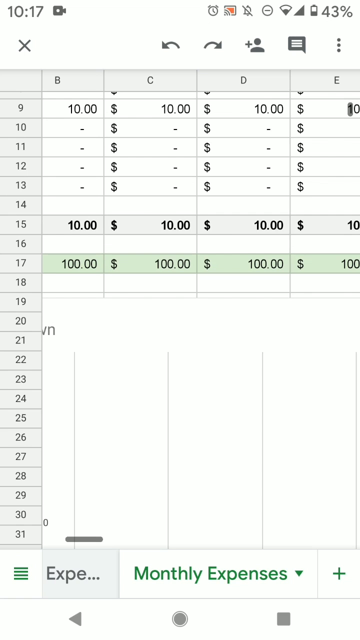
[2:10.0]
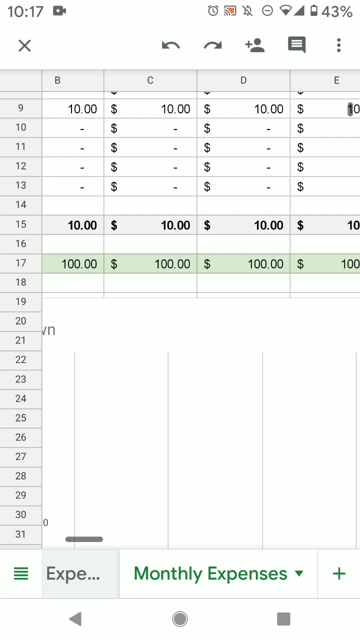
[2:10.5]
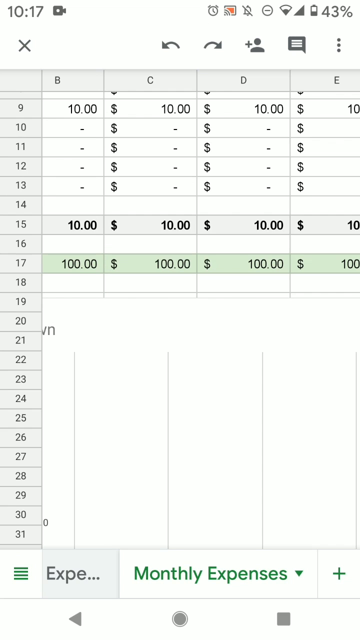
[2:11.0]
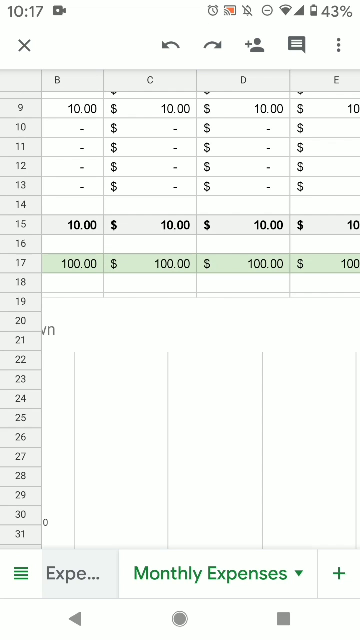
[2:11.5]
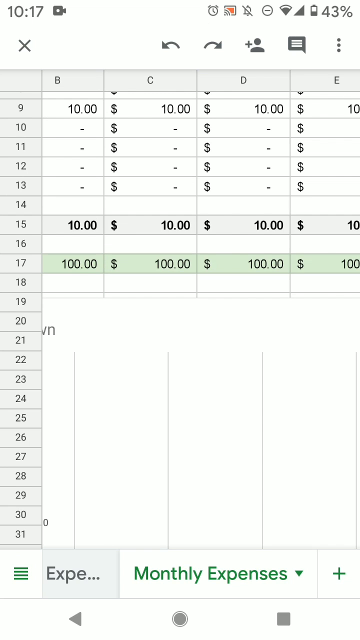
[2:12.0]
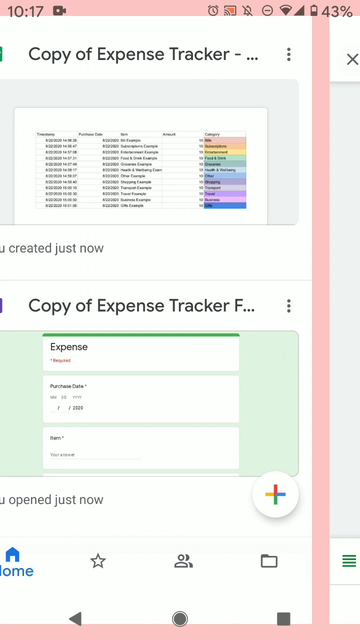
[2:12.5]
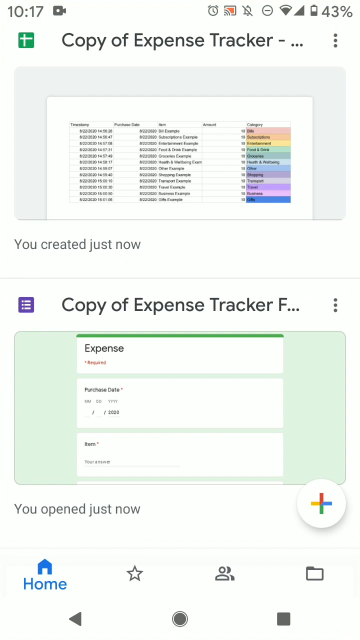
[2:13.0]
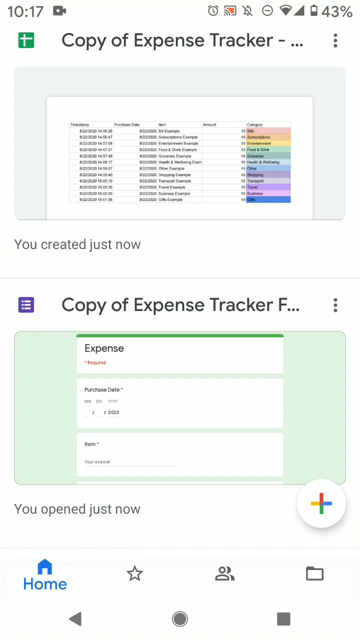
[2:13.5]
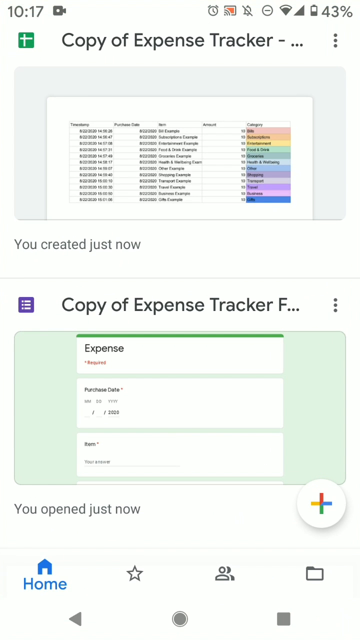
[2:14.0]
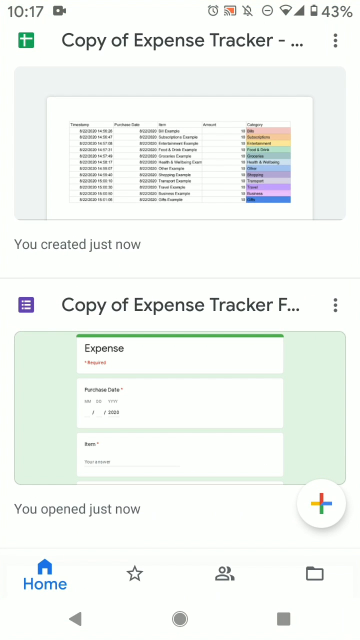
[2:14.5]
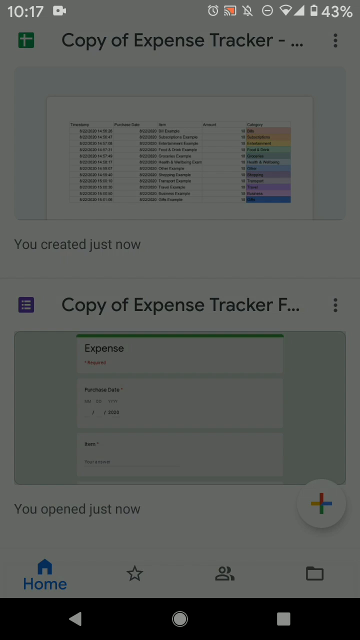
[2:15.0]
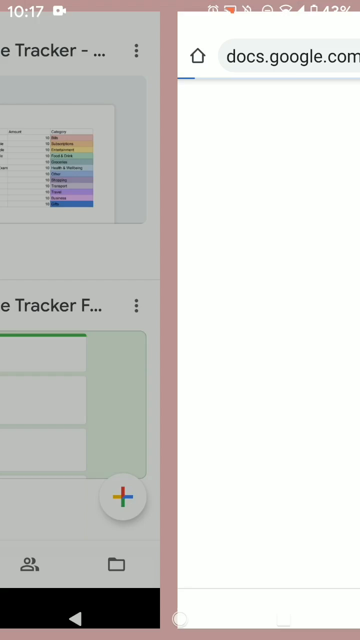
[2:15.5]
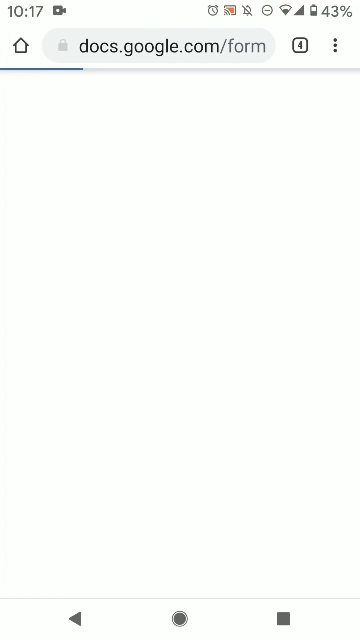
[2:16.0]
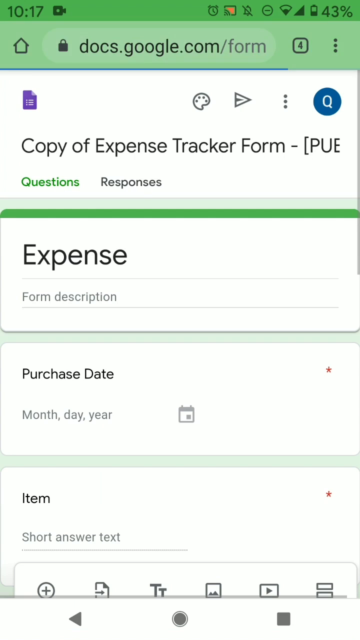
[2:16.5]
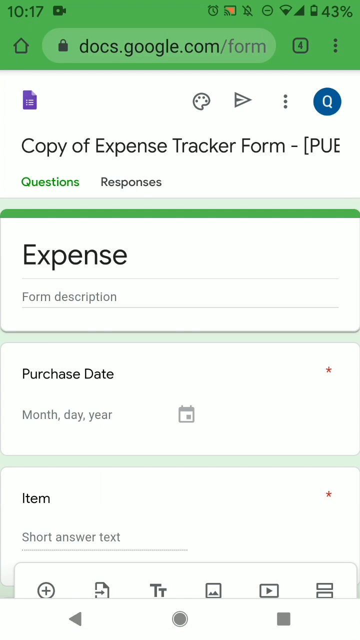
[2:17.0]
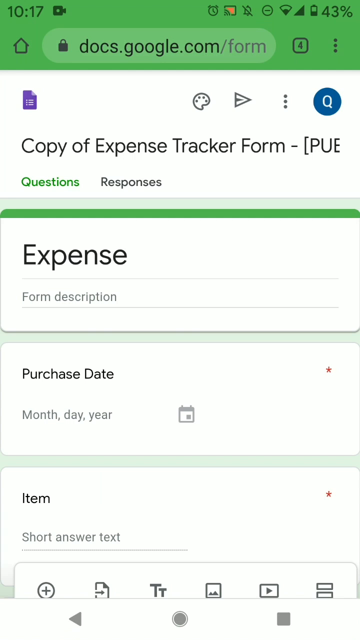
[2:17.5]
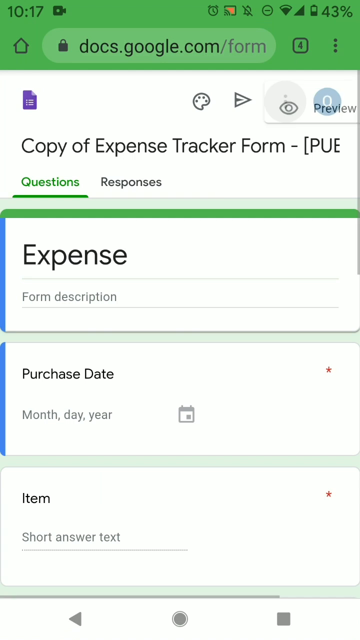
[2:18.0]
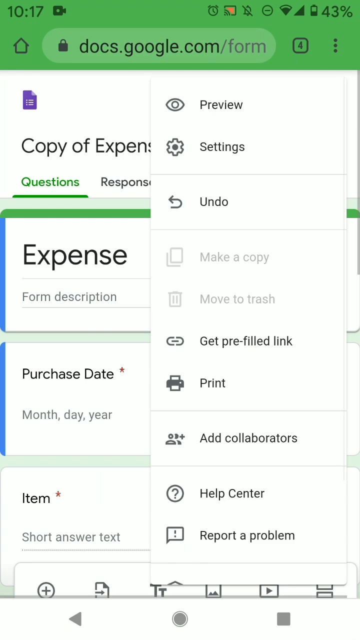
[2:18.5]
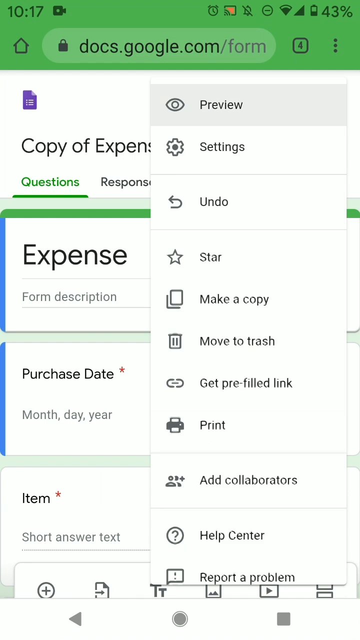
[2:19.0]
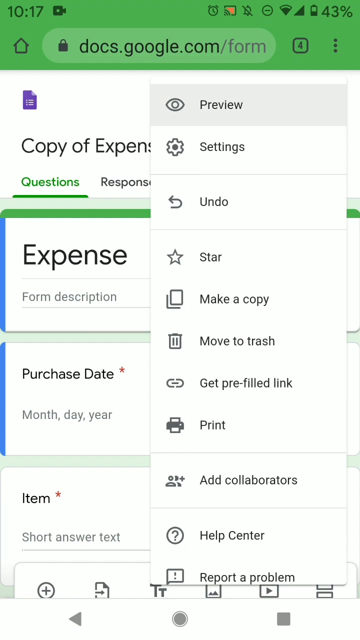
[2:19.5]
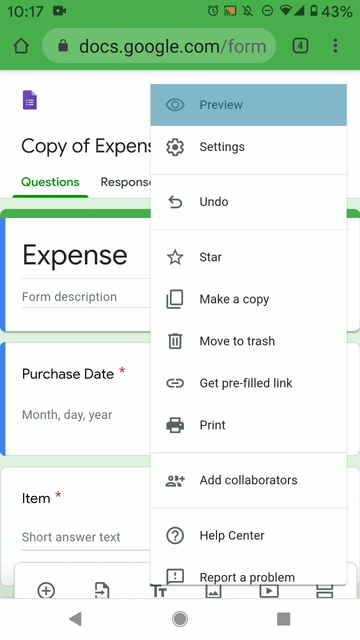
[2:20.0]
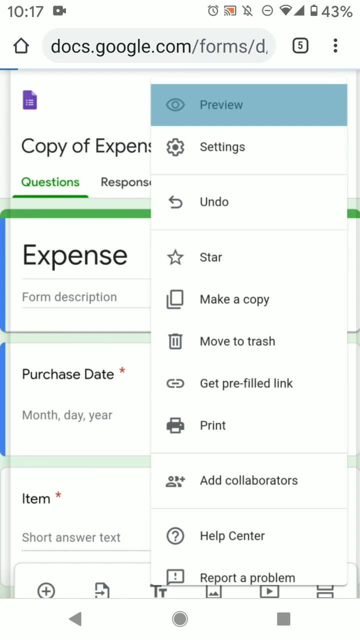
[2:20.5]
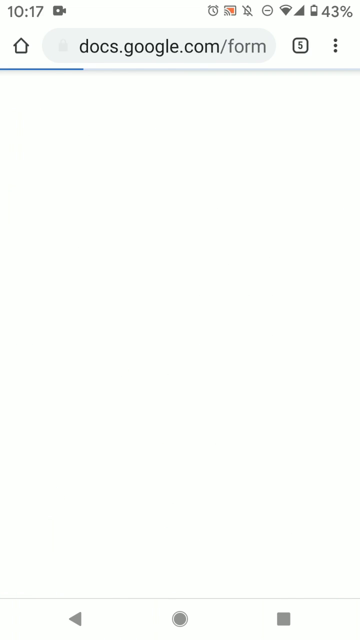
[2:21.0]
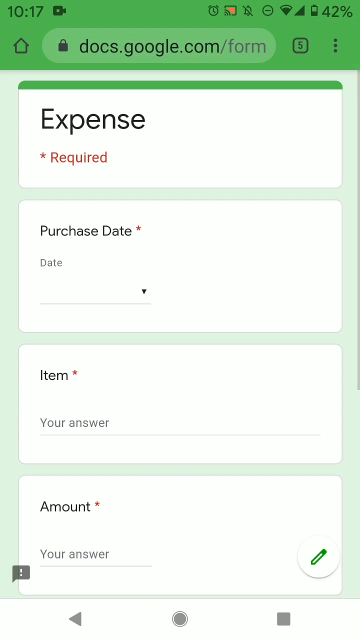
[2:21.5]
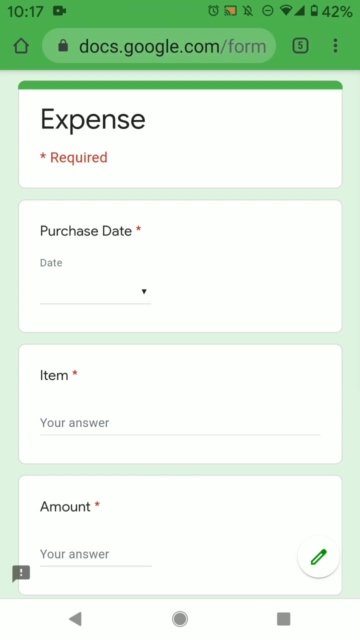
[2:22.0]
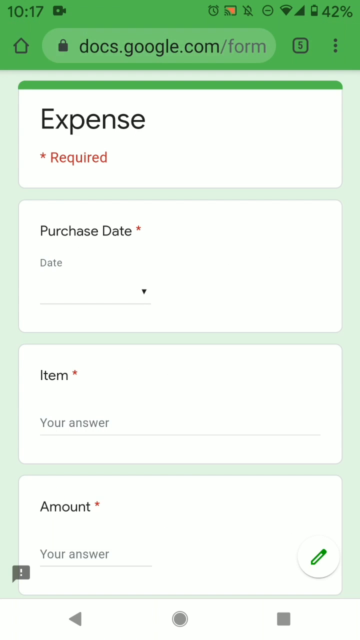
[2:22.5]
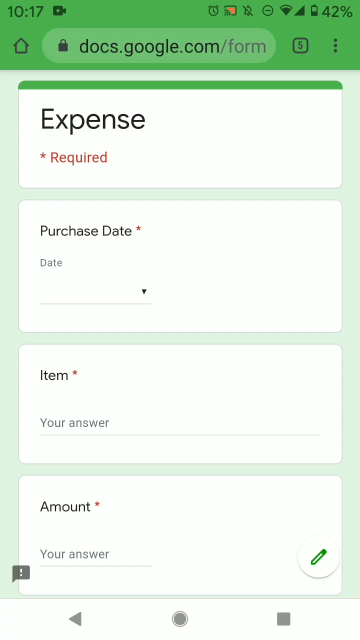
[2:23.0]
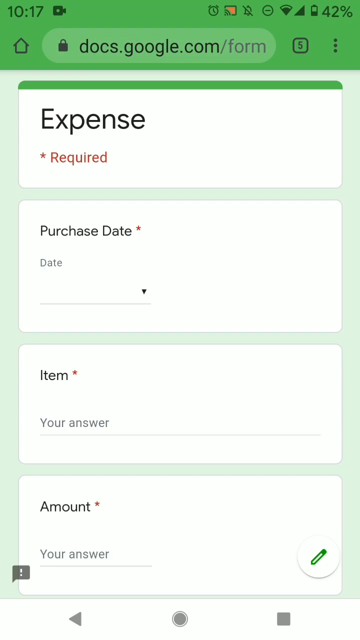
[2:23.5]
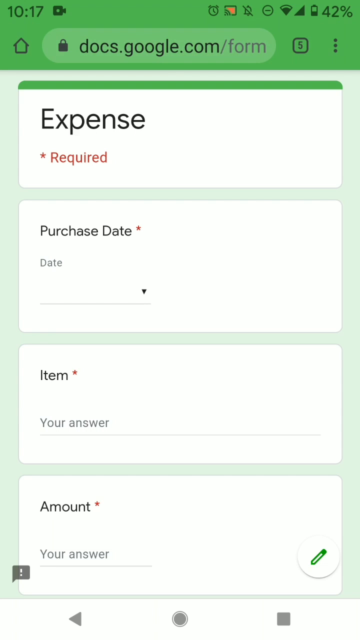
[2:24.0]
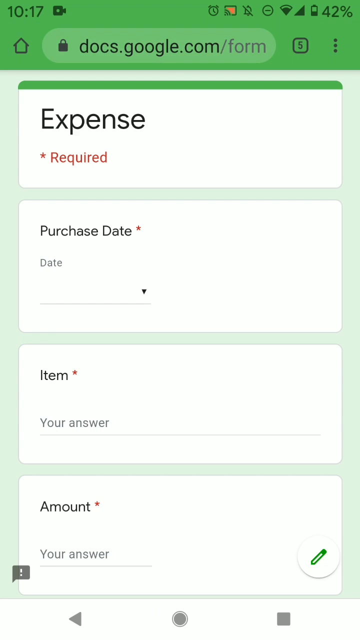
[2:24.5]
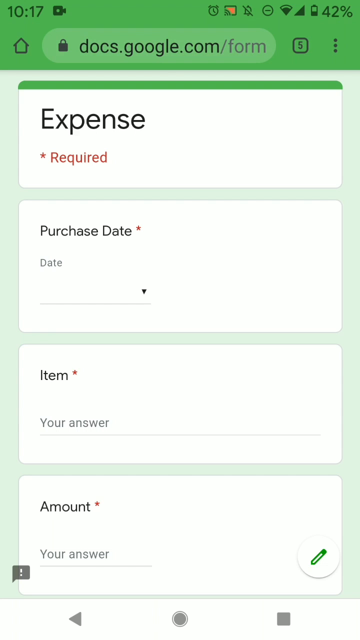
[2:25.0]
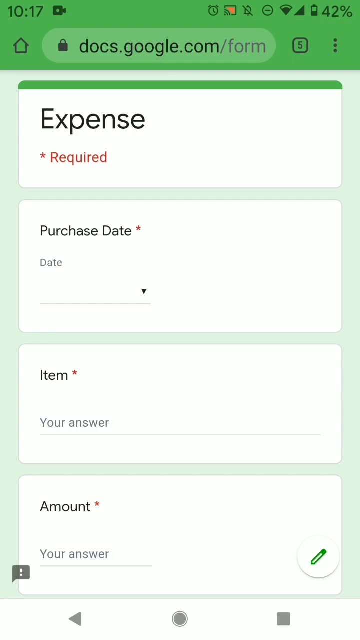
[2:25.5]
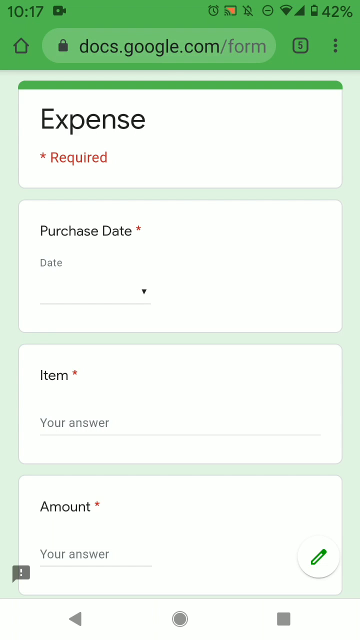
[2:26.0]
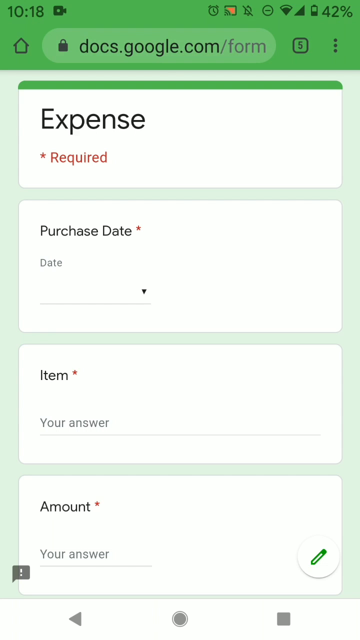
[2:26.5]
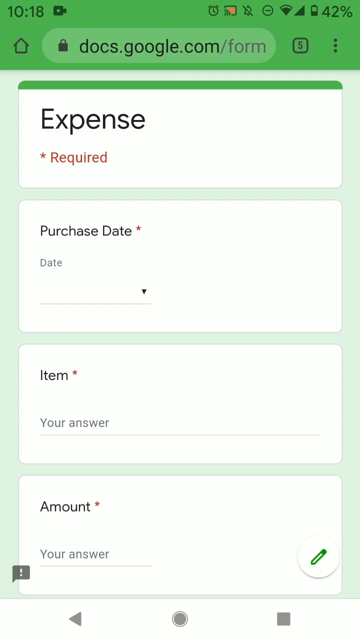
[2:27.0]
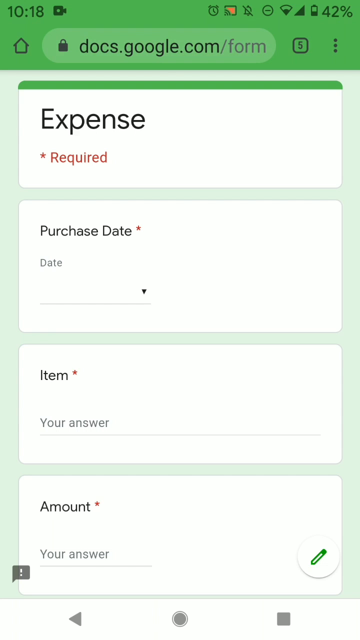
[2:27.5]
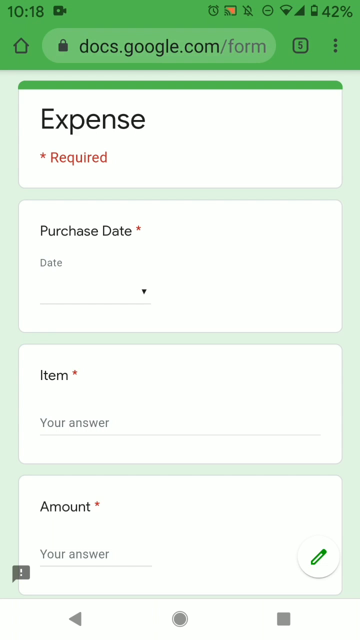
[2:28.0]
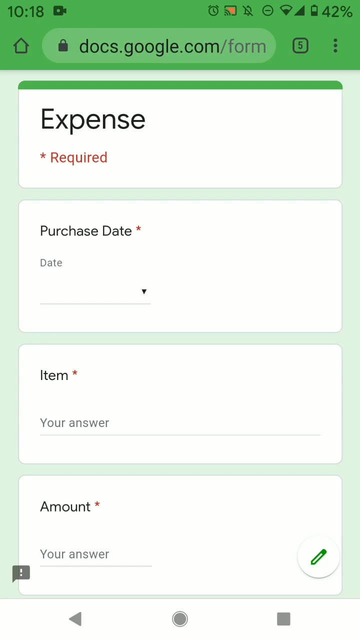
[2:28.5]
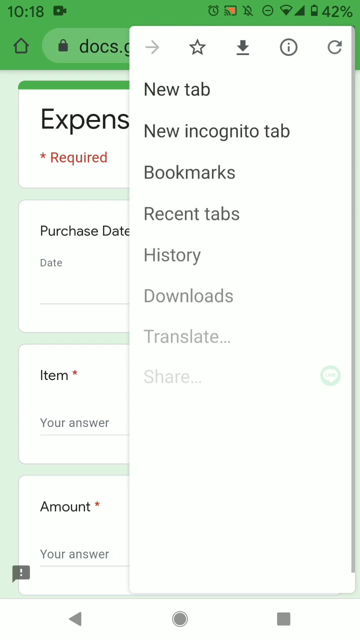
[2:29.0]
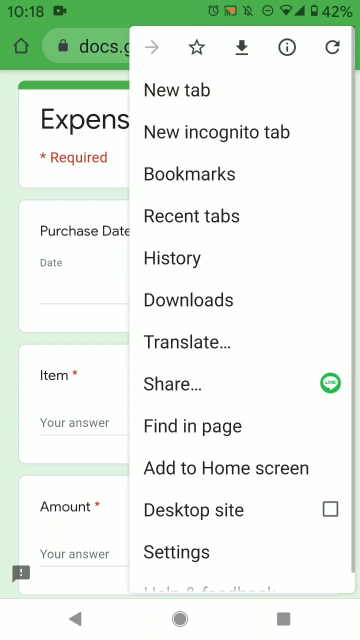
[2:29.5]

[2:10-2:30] What appears to be the expense form is selected, and the view moves to another window with "copy of expense trackers" at the very top. It shows a form with many kinds of text, with colors on the right-hand side: pink, brownish, orange, yellow, light blue, blue, light blue, another blue, purple, a lighter purple, a darker bright purple, pink and blue. Text at the bottom indicates it was created just now, and "copy of expense form" shows it was opened just now. It is selected, and the page loads to the copy of the expense tracker form. A menu of sorts is selected on the form, and "preview", which has an eye icon, is highlighted and clicked, leading to a different version of the form. A menu then appears with new tab, new incognito tab, bookmarks, recent tabs, history, downloads, translate, share, find in page, add to home screen, desktop site and settings.